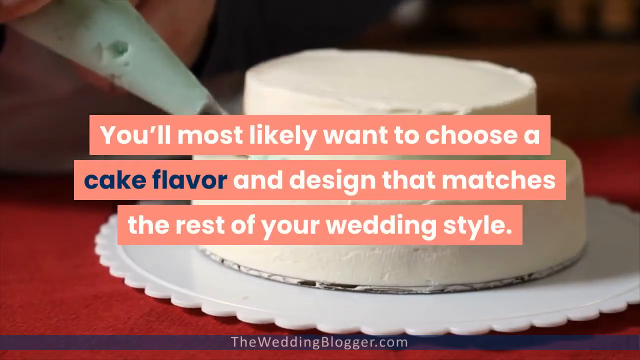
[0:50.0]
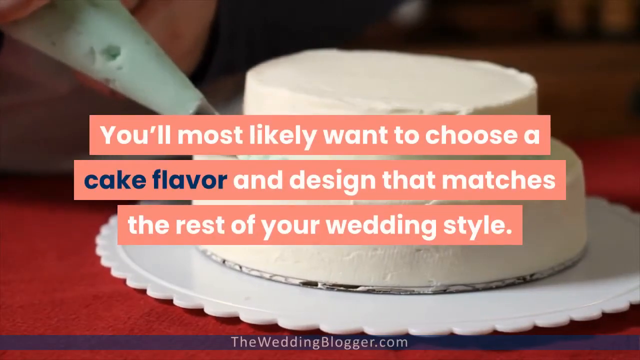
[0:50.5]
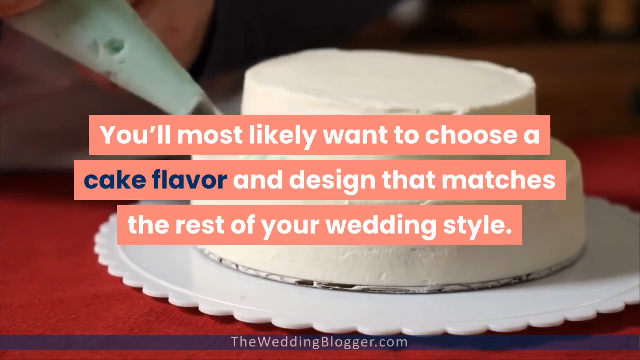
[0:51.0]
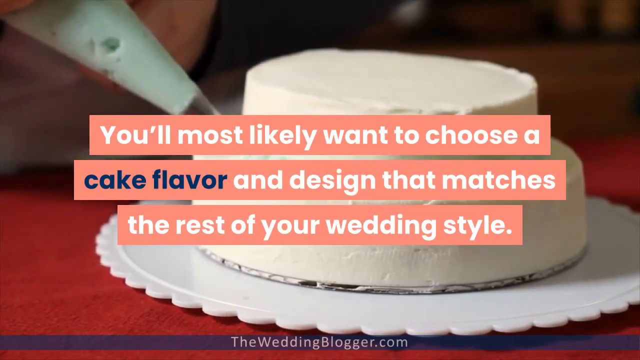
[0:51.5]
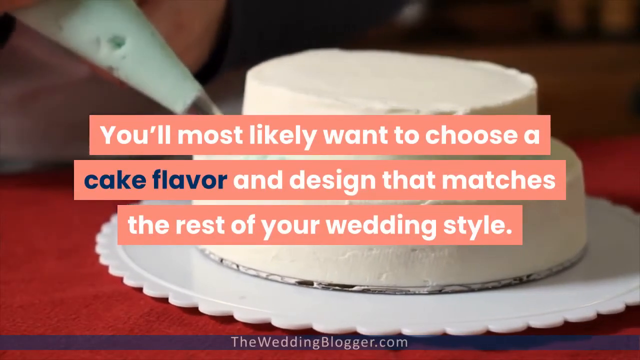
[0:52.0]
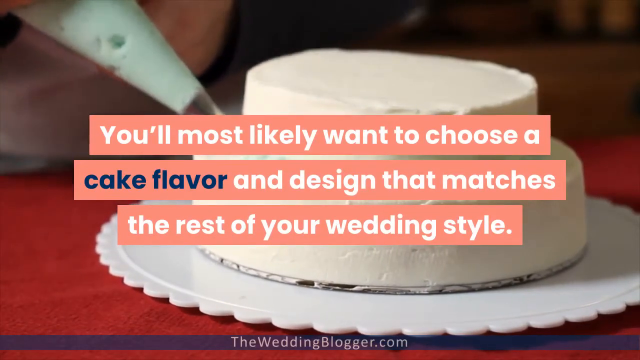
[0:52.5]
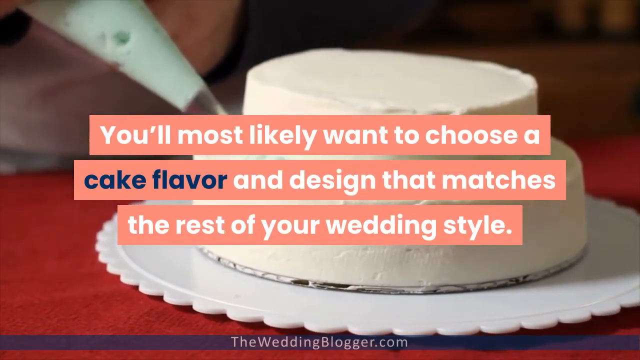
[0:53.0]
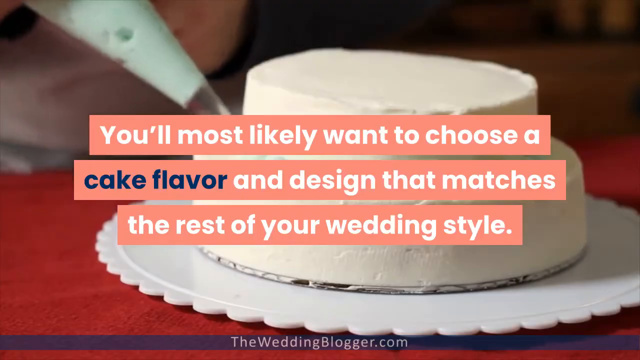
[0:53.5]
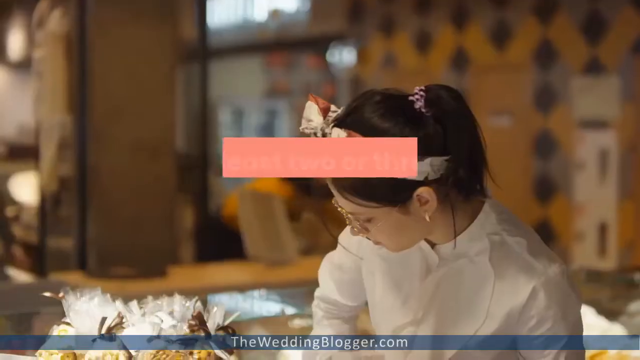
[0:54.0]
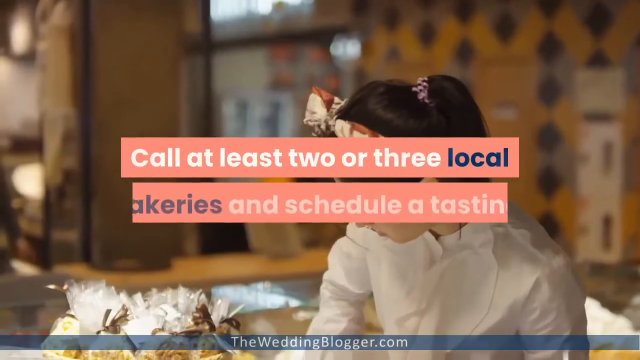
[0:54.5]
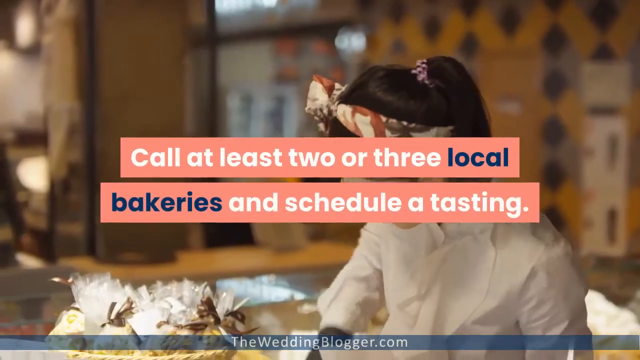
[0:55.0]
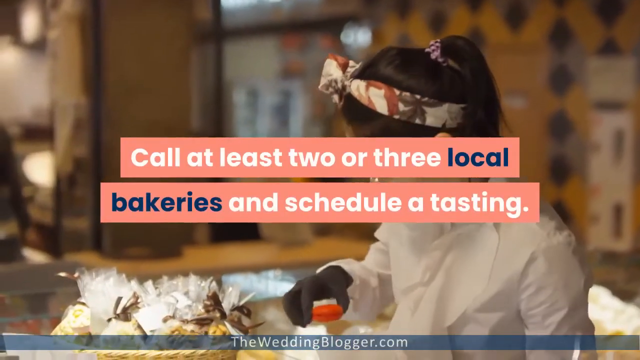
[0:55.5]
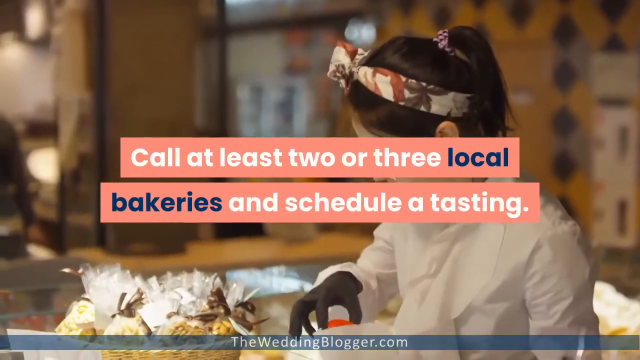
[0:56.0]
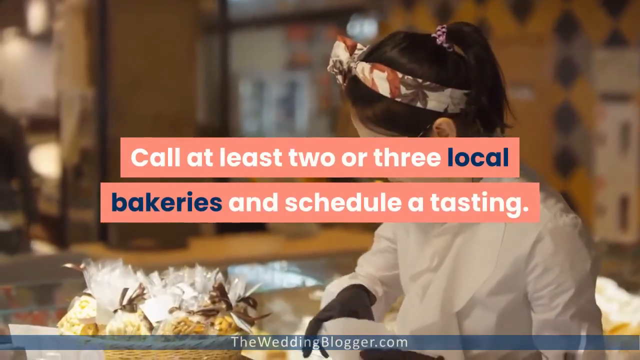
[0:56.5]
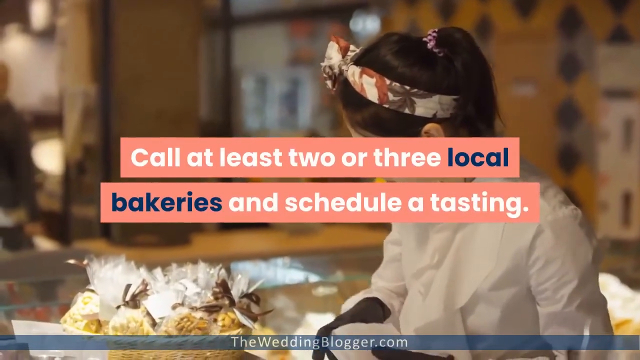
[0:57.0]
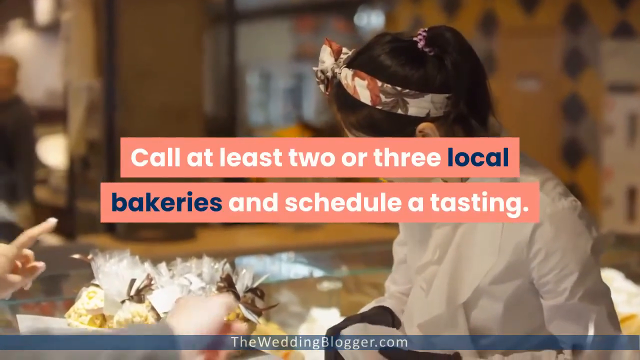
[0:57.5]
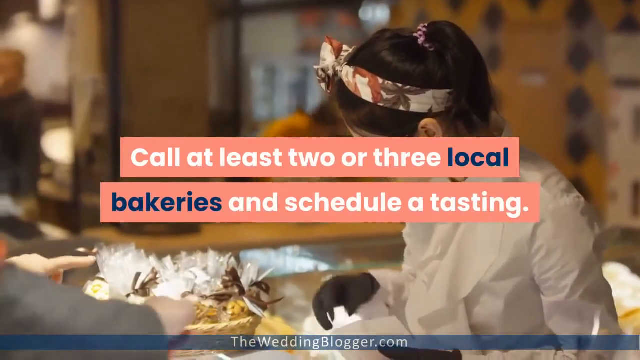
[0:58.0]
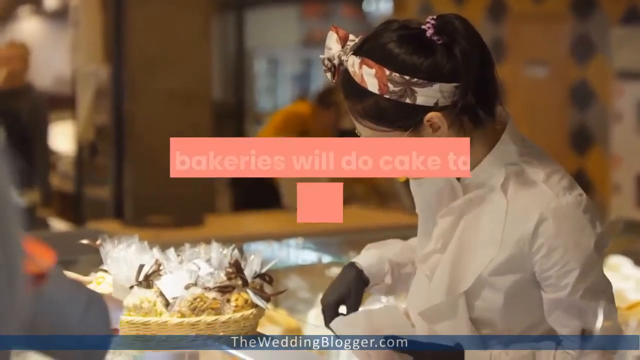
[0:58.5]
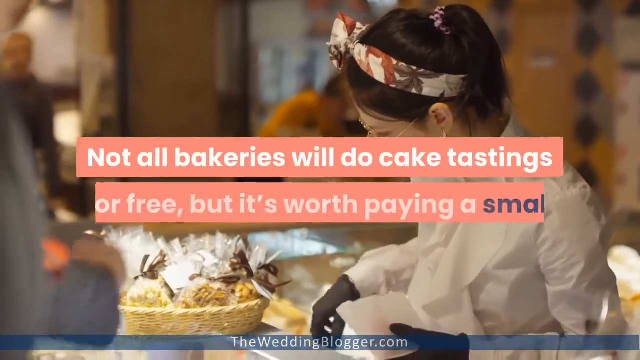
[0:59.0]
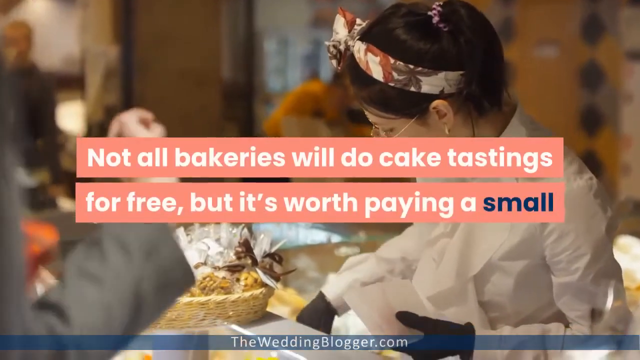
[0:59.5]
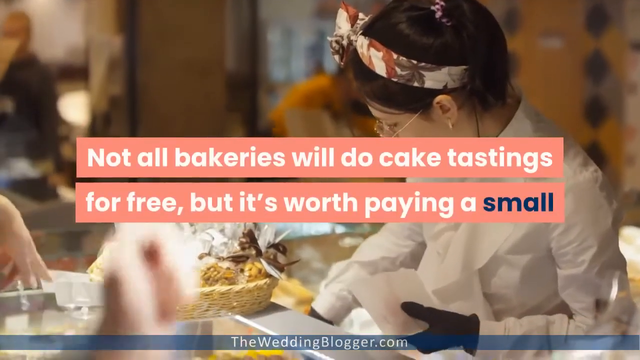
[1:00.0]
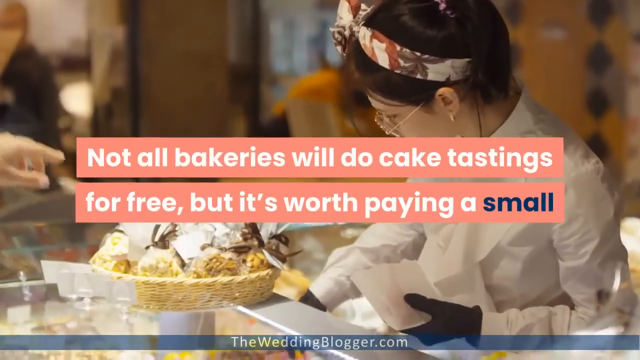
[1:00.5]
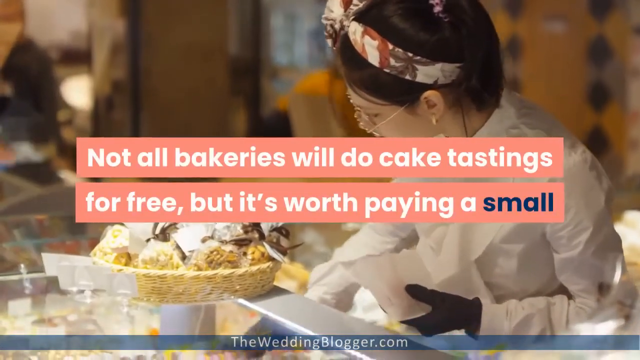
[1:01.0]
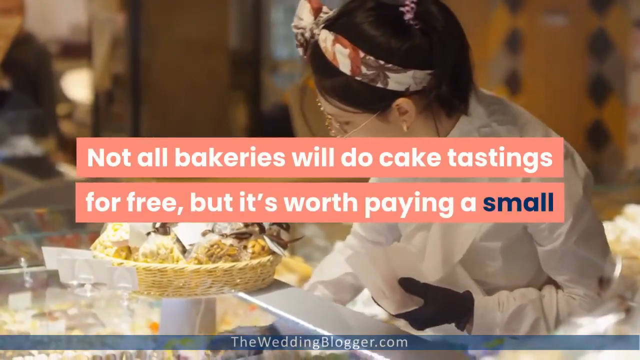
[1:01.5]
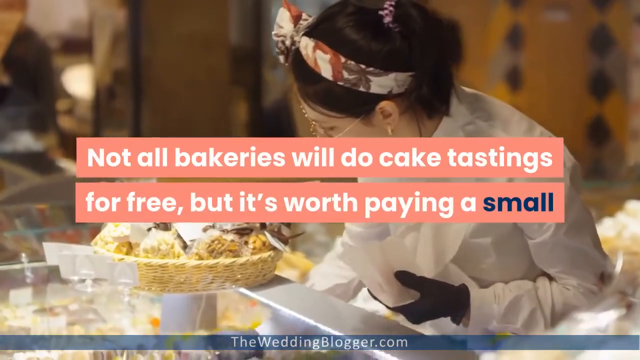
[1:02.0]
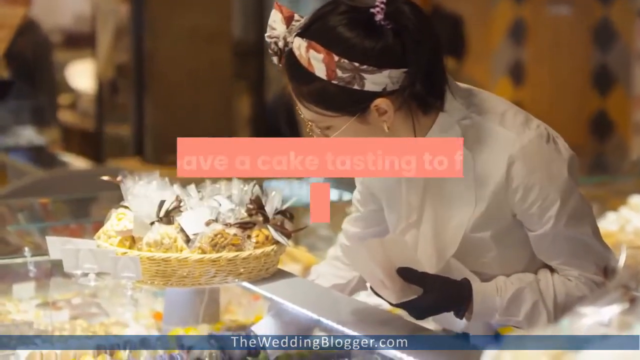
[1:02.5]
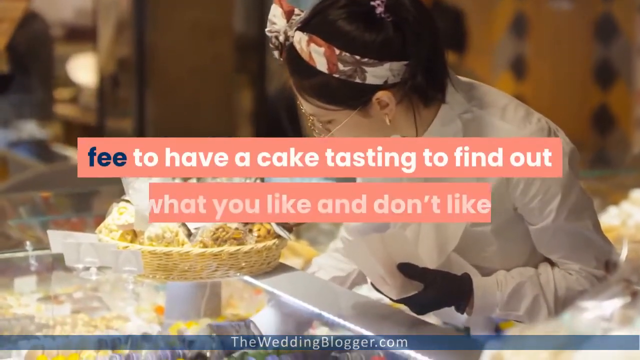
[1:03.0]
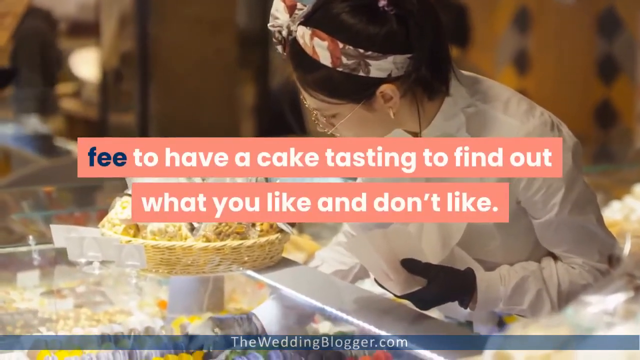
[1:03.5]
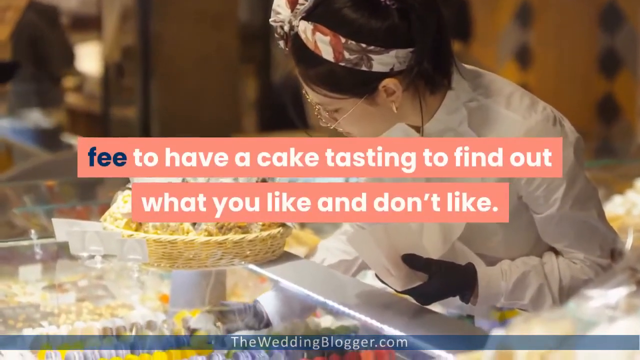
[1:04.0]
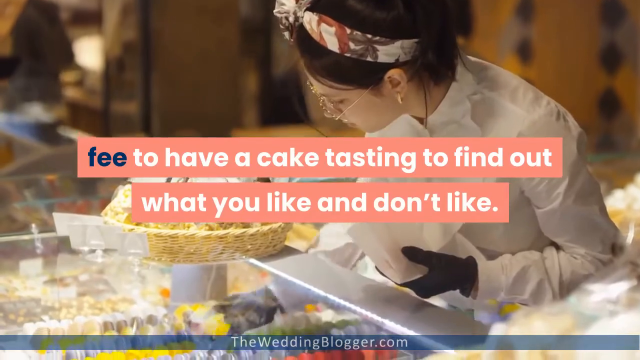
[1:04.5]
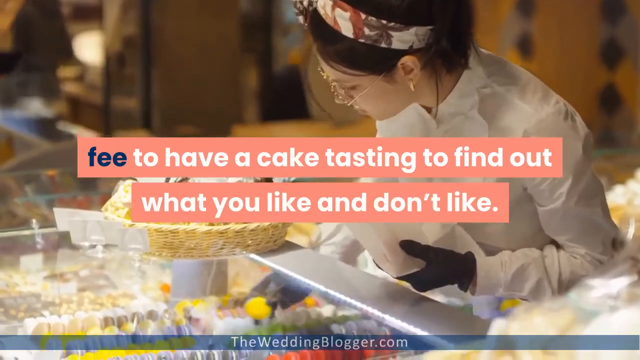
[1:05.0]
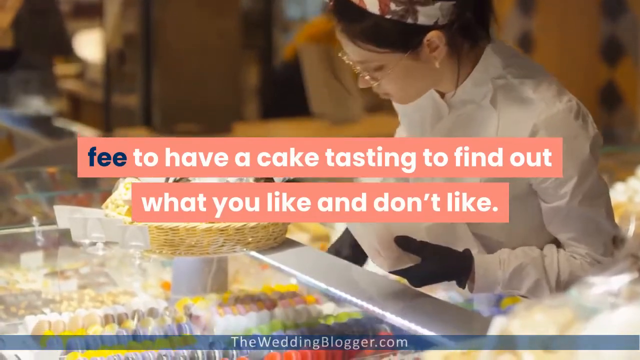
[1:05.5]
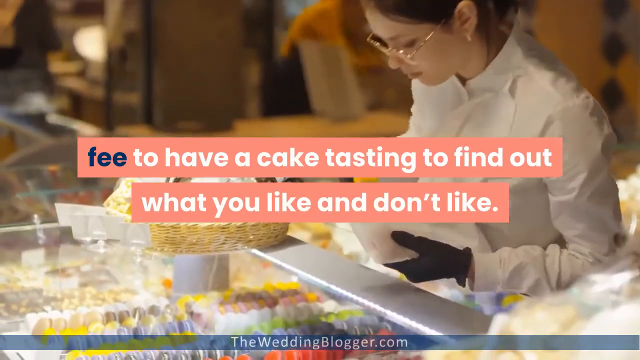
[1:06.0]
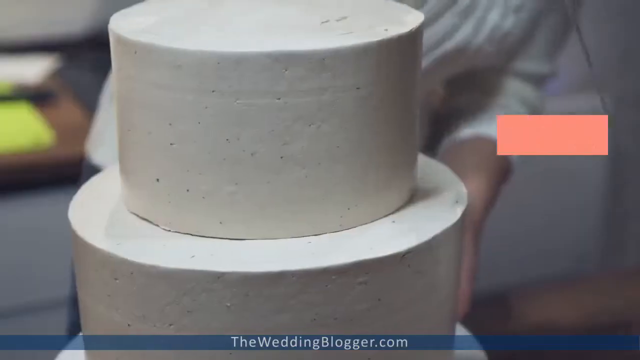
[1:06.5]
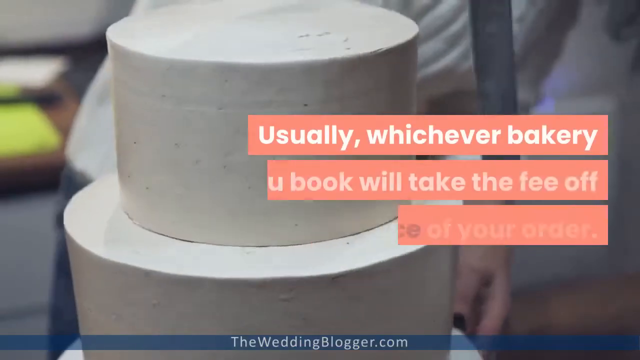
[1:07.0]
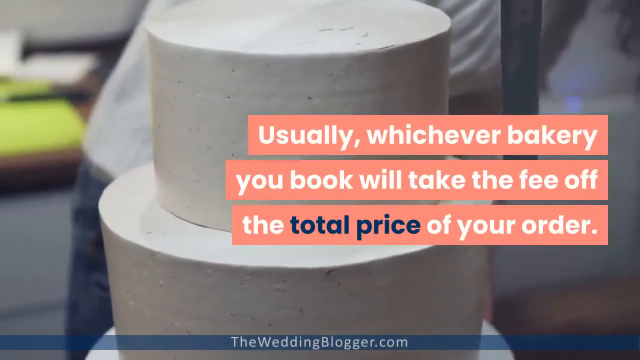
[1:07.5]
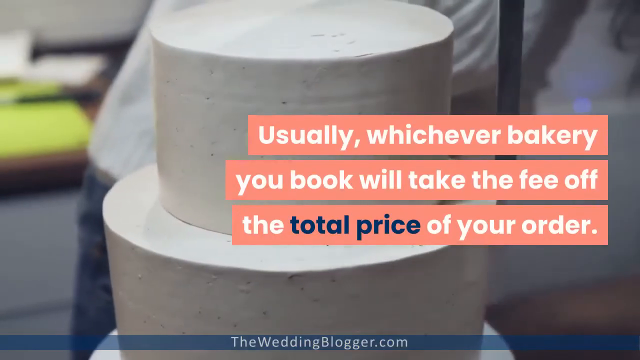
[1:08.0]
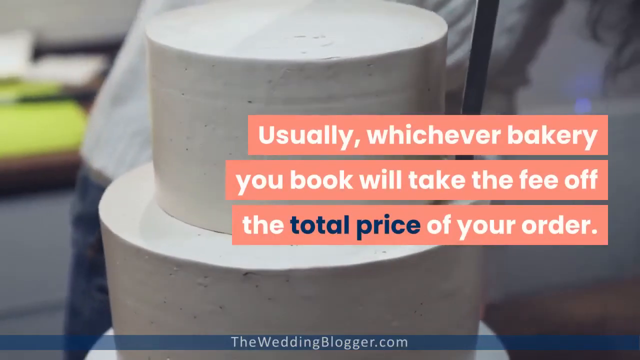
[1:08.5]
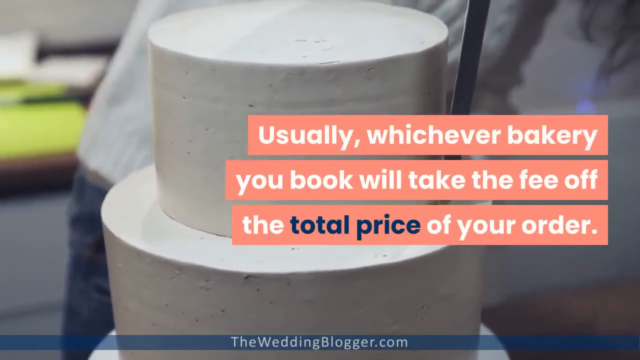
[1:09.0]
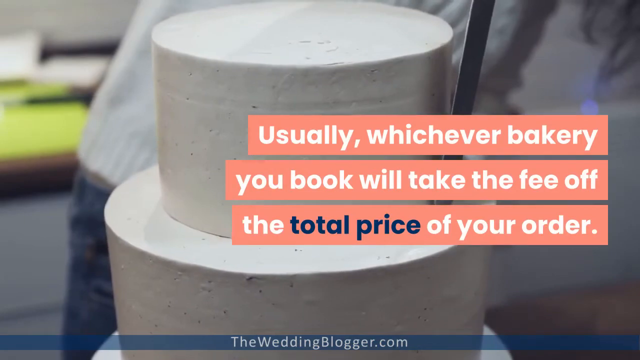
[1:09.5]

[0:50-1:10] Text reads "You'll most likely want to choose a cake flavor and design that matches the rest of your wedding style." A small two-layered cake is shown while someone holds a piping bag and pipes green frosting around its edges. Next, a person with dark hair and something wrapped around her head appears; she is wearing white and purple gloves. Text reads "Call at least two or three local bakeries and schedule a tasting." The person is putting cookies into a bag, and the text continues "to have a cake testing to find out what you like and don't like." With their right hand, they reach and pick up another item to put into the bag. Text then reads "Usually whichever bakery you book will take the fee off the total price of your order," and what appears to be someone uses a tool to smooth out the icing on a two-tiered cake.